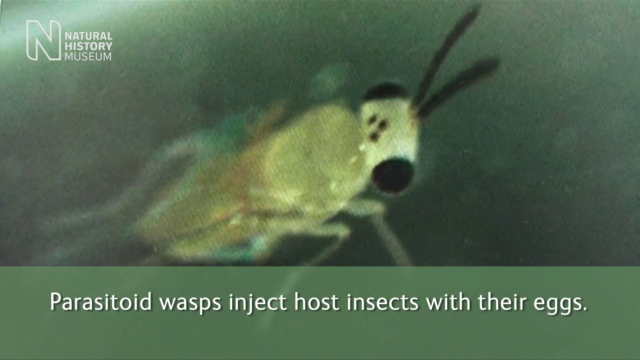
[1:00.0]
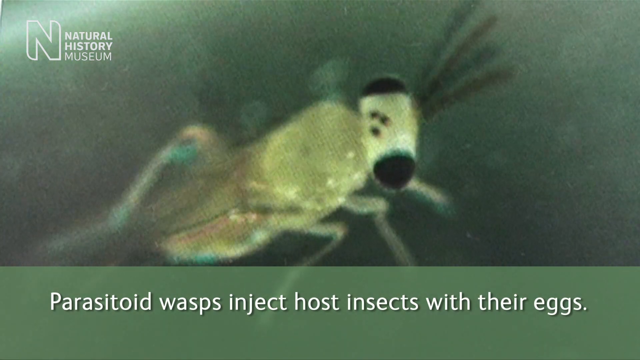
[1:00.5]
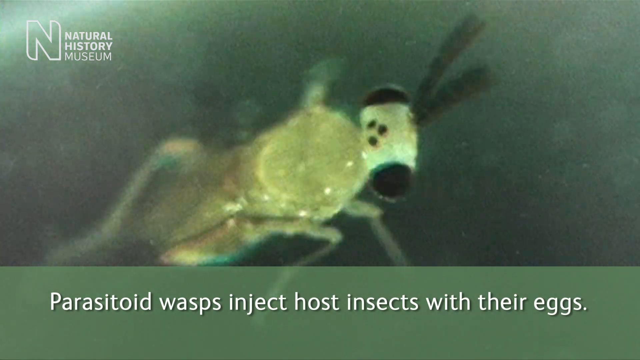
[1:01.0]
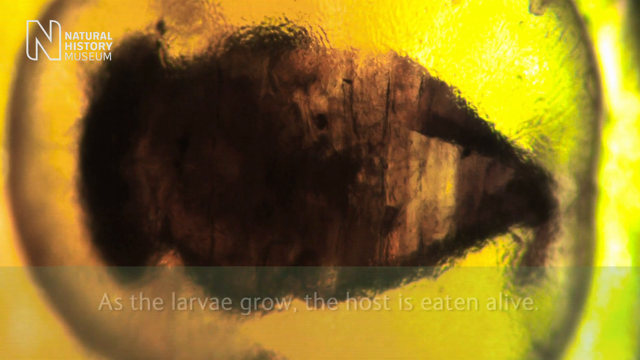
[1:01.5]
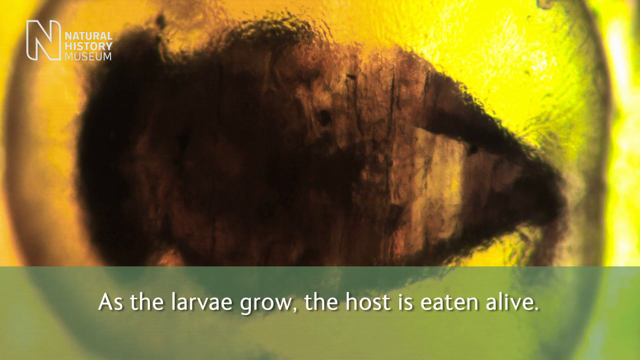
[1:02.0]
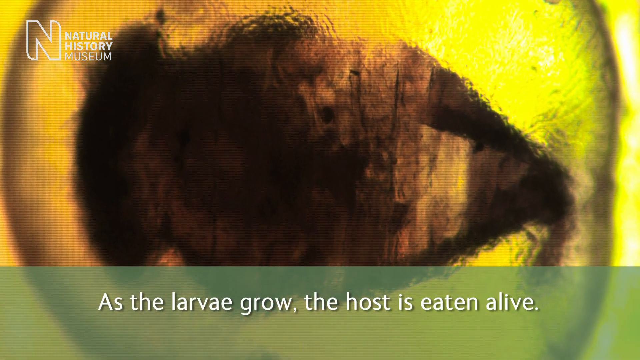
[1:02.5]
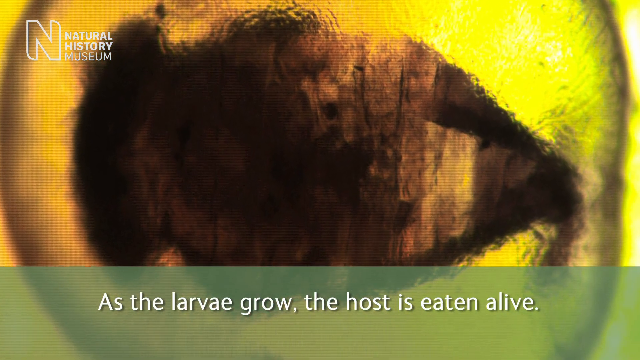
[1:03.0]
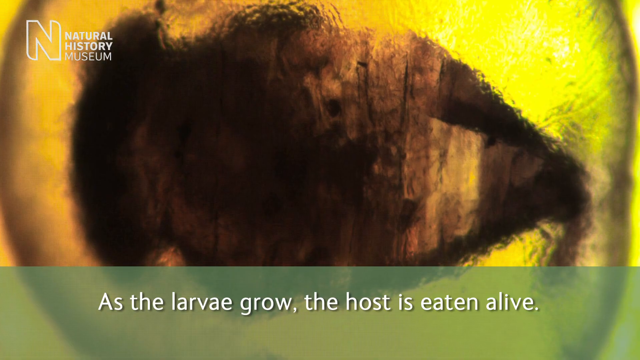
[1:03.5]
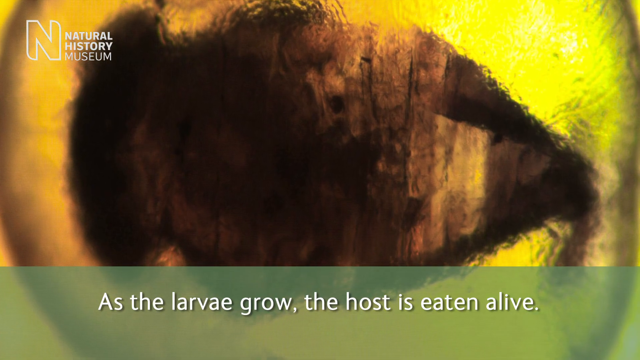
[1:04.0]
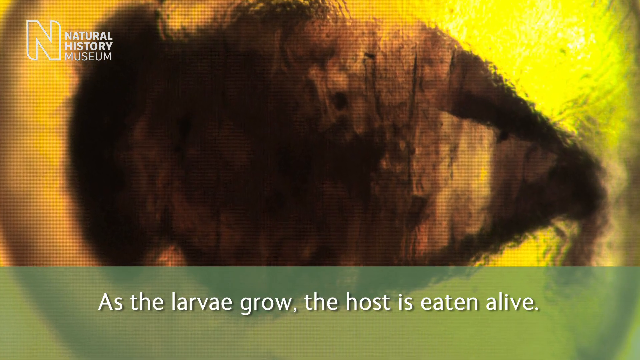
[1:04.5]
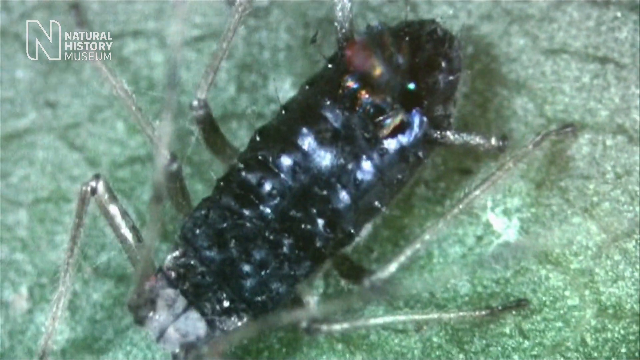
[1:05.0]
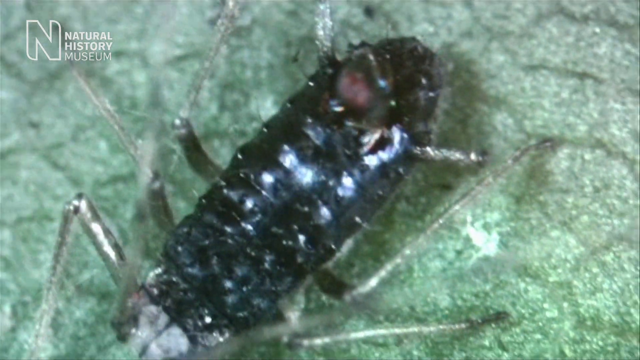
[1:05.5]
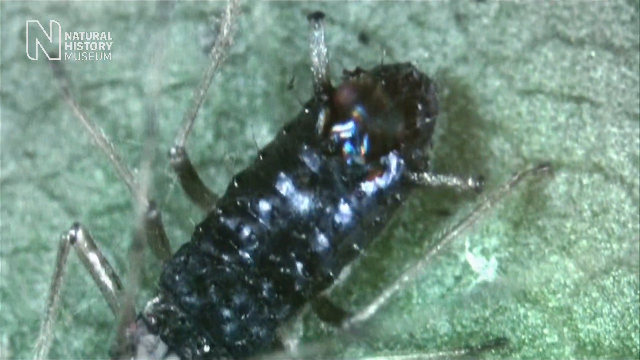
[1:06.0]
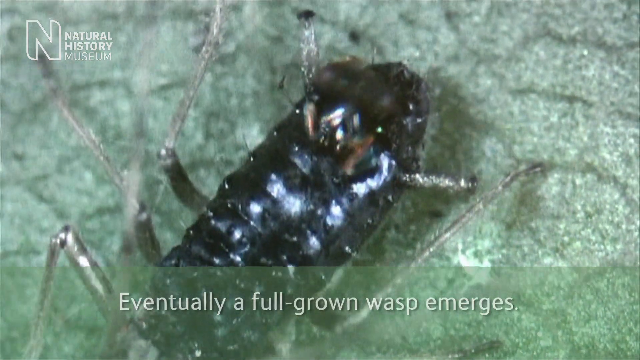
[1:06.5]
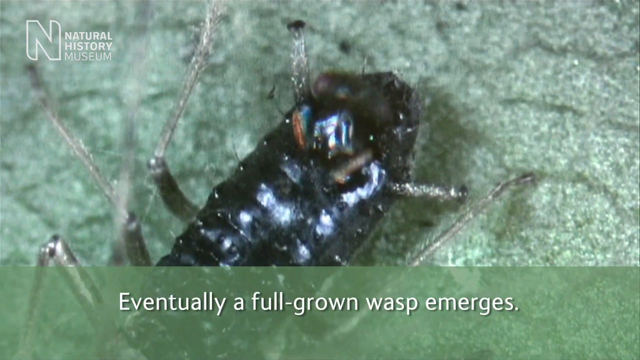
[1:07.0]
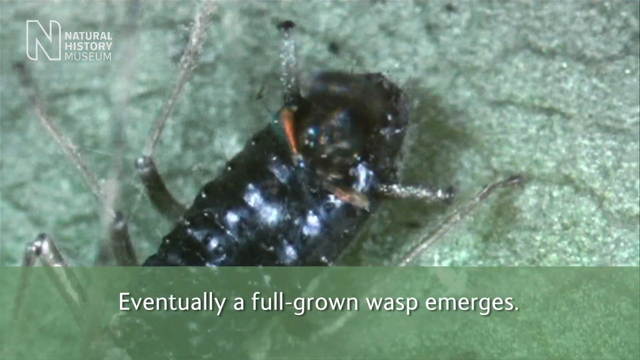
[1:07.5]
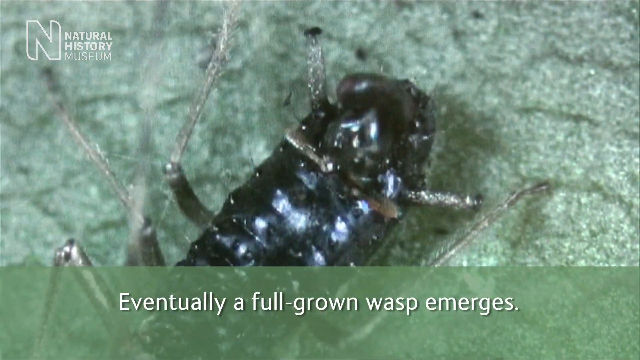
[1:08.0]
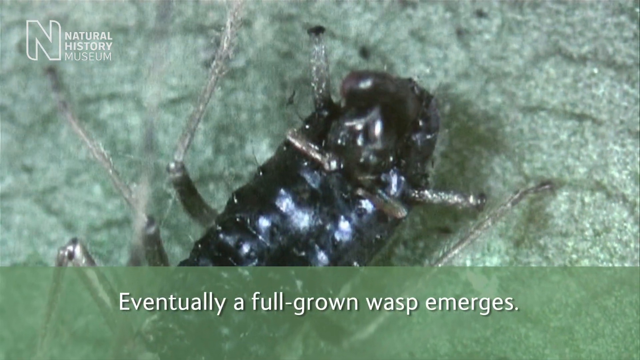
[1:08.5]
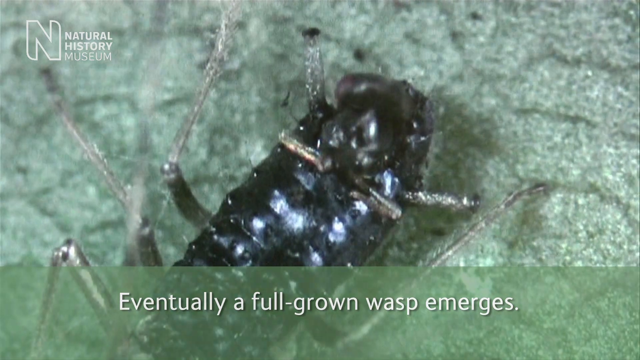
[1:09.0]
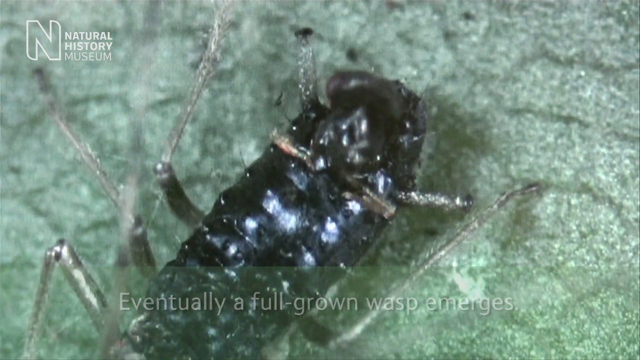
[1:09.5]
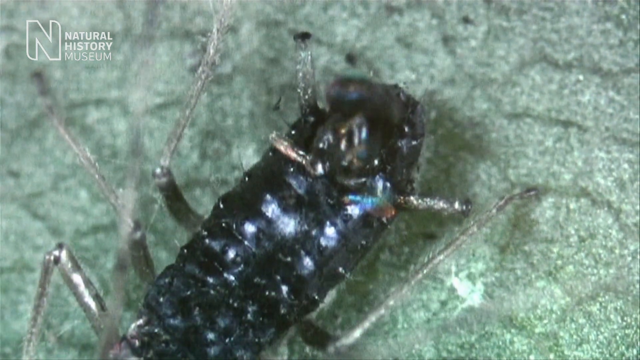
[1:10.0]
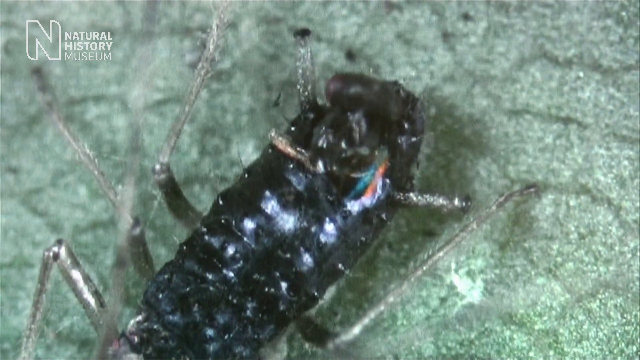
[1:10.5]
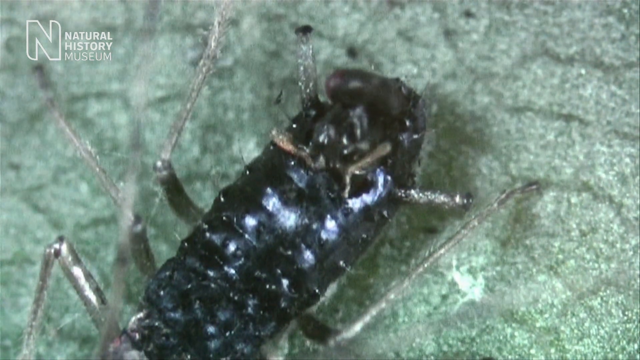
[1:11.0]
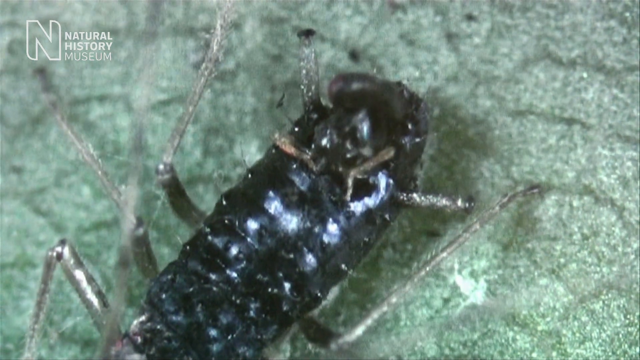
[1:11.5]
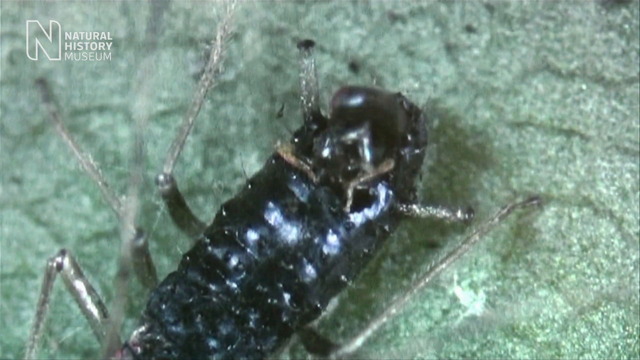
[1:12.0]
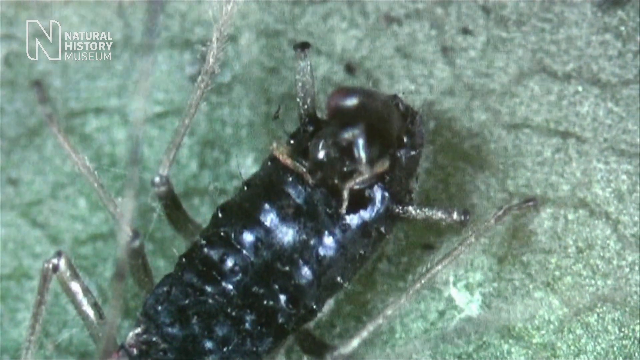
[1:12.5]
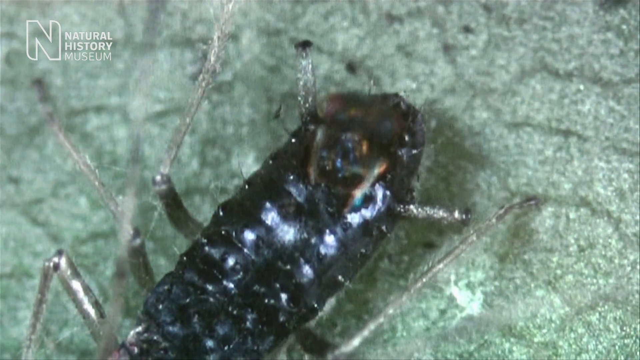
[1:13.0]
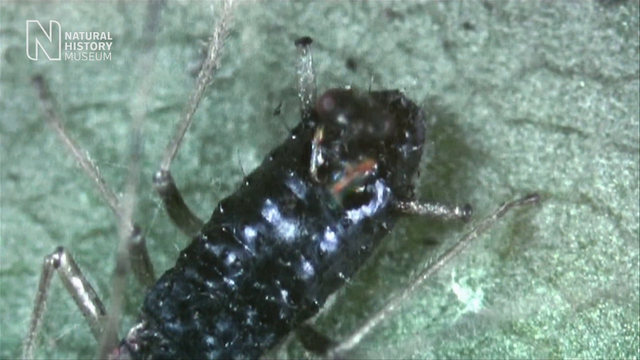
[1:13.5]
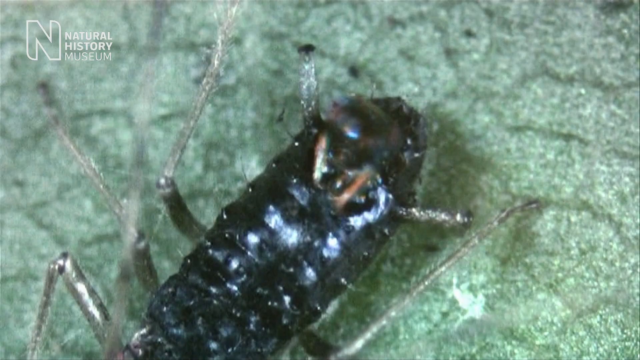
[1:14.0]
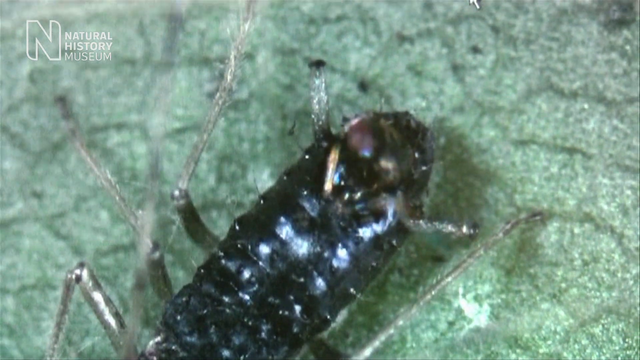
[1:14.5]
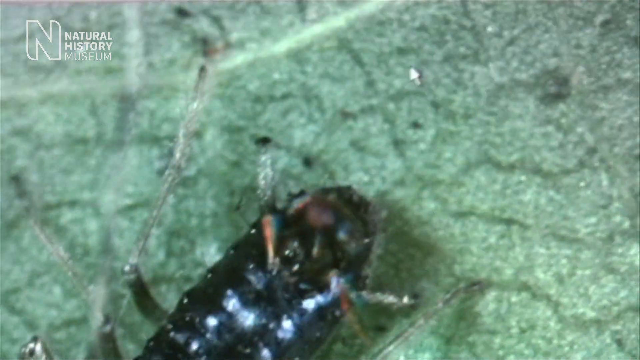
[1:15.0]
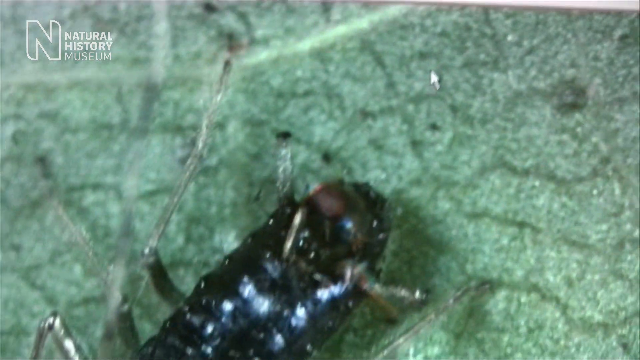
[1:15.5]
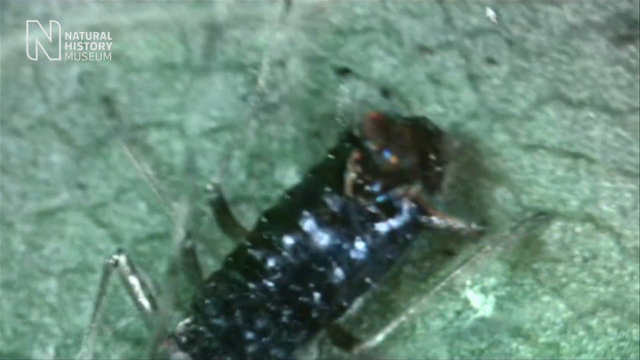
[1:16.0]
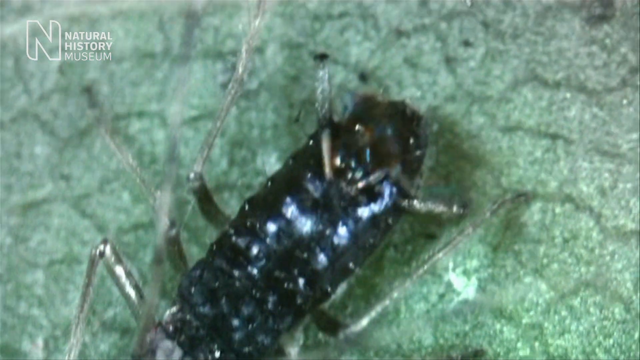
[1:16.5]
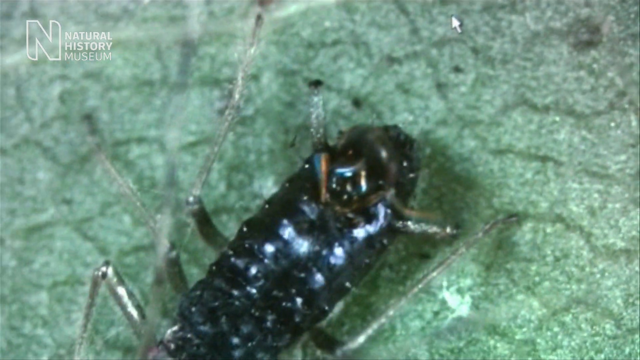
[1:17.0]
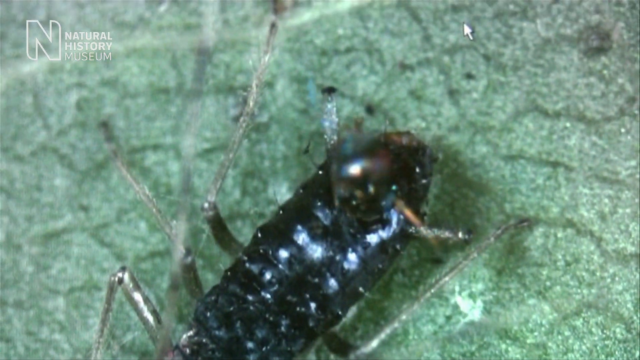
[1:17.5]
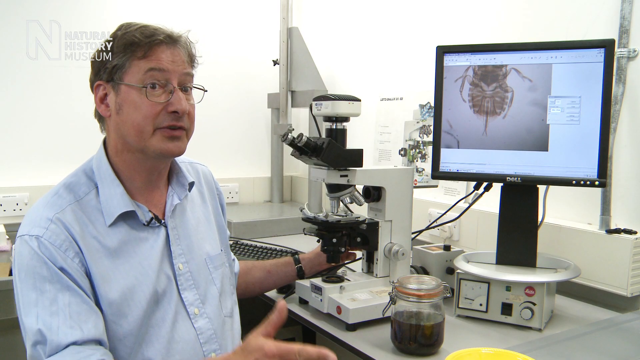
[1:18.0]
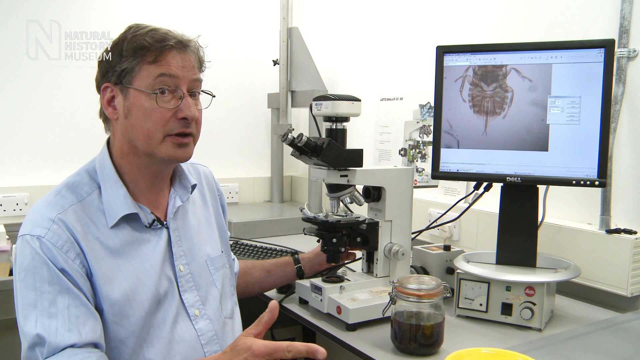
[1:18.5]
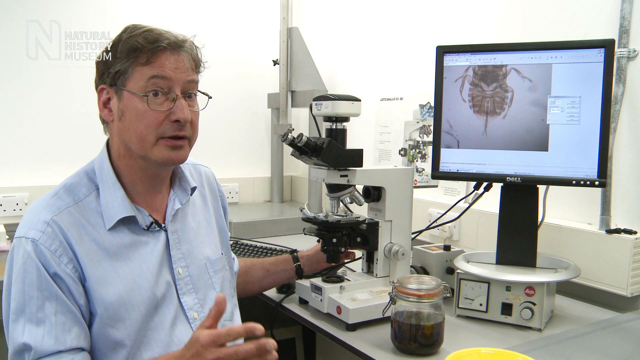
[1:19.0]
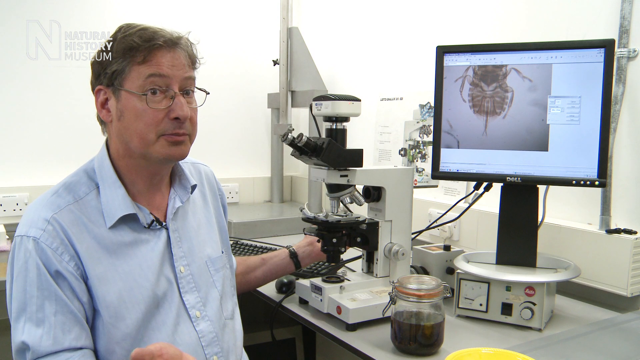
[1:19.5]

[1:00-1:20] A close-up shows the wasp with its slightly translucent, transparent body. Its wings move backwards and forwards, and two antennae or proboscis come from the top of its head towards the right-hand side. Its head is in a vertical up-down position, black at the top, translucent with three dark black spots, and with a black area towards the lower part. The legs move, wiggling around as if the camera or the wasp cannot stay still. Text at the bottom identifies it as a parasitoid wasp. The video then cuts to a yellow shot with something brown, perhaps the insect again, in the foreground. It has a slightly pointy area towards the right-hand side where the yellow is brighter, and it increases in size from right to left, with tan and brown colours, looking slightly fuzzy. Text at the bottom says "as the larvae grows the host is eaten alive", so this may be the larva growing within the host. The view moves to an even closer close-up and then to what is perhaps the larva hatching, against a slightly mint-coloured crystalline background. Its legs, about five of them visible, are a silver metallic colour, and its body is shiny black with some bright silvery or reflecting spots. The body is oriented at about 45 degrees with the head towards the top right, and there is a slightly pink area where the head joins the body. The camera moves backwards and forwards across it, and there is some movement at the head, either an antenna moving or the head itself. The video then returns to Dr. Prochester with the screen in front of him.